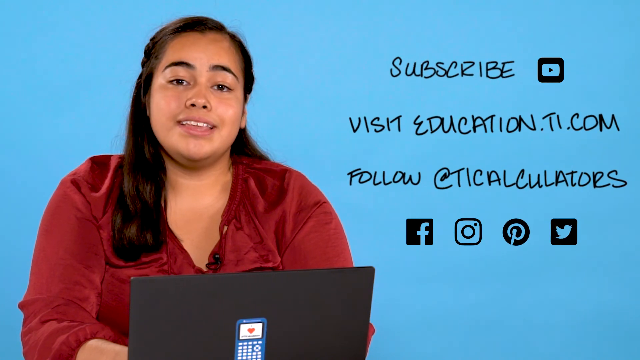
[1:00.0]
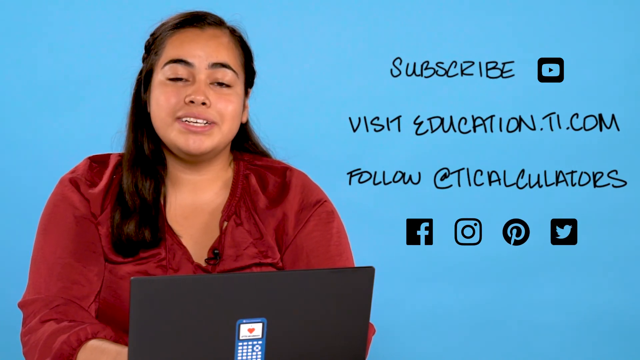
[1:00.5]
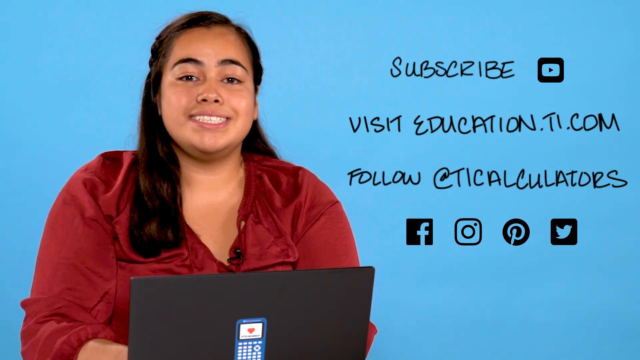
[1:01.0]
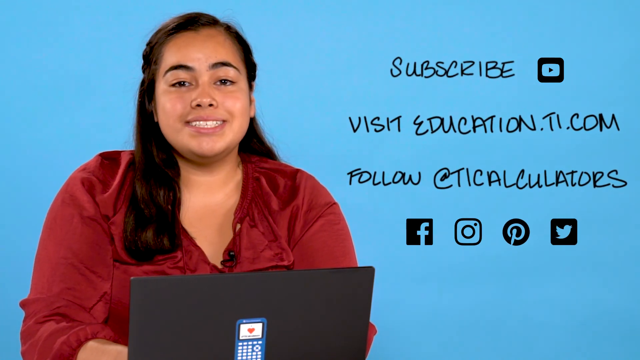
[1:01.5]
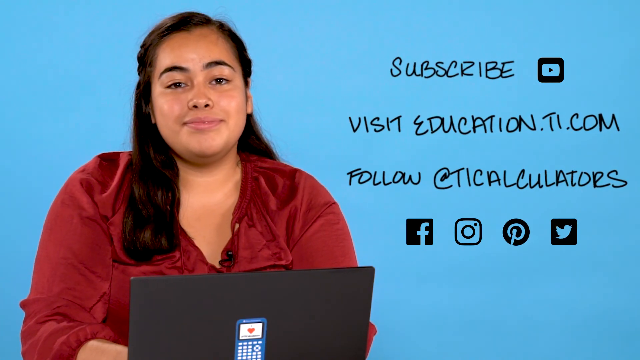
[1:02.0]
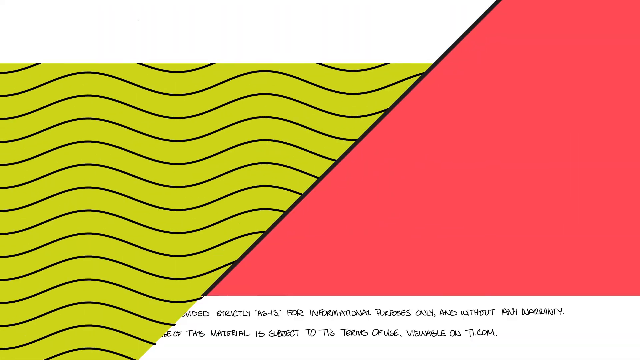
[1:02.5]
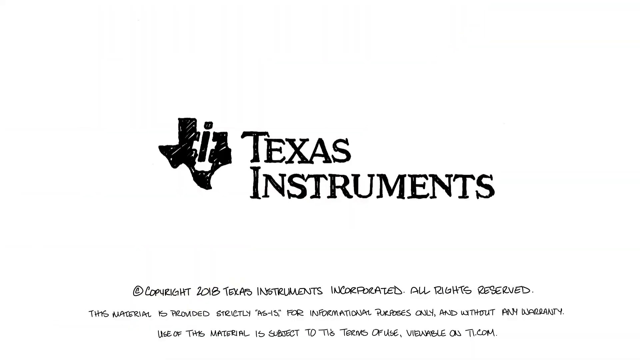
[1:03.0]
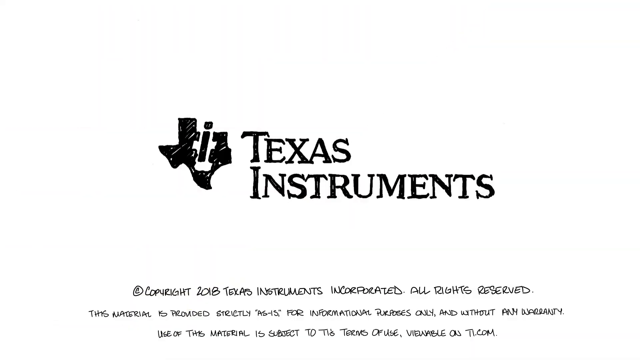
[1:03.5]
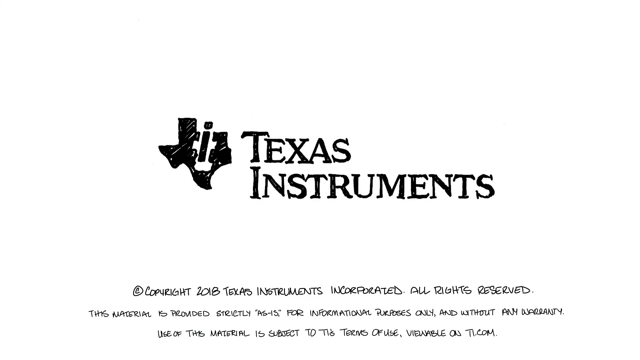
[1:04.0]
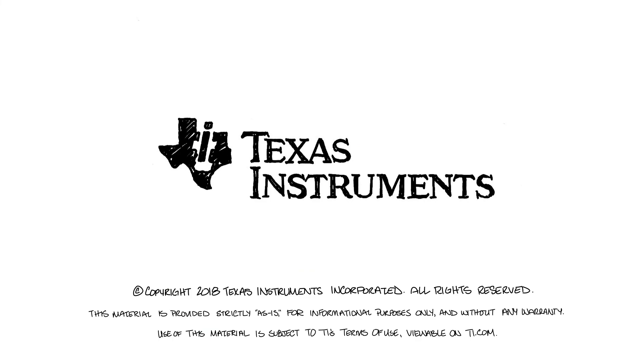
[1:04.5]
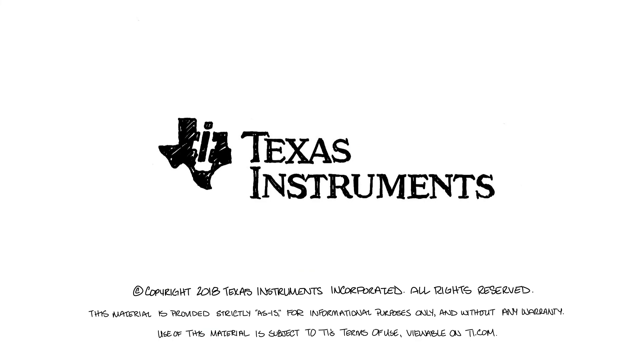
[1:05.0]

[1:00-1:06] The lady in red, described as a Spaniard and a little heavier set, wears a fancy red long-sleeve shirt. Behind her is a blue background, and on the right-hand side of the screen text is written in black. It says "subscribe", with a picture like a play button; under that it says "visit education.ti.com", and under that "follow at TI calculators". Below that are a picture like a Facebook symbol, a picture like a small camera, an unidentified circular picture, and a picture of Twitter next to that. The video then quickly flashes yellow and pink wavy lines that go from one side of the screen to the other, crossing each other. The last screen says "Texas instruments" in black, with the Texas Instruments logo on the left-hand side. At the bottom it says "copyright 2018 Texas Instruments Incorporated all rights reserved", with some smaller print underneath.